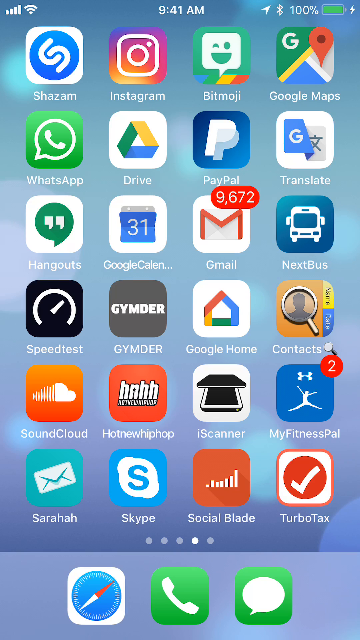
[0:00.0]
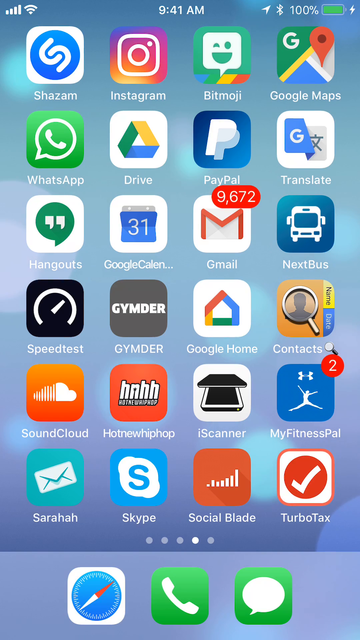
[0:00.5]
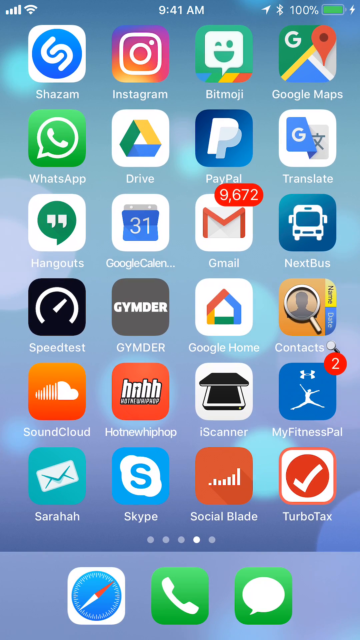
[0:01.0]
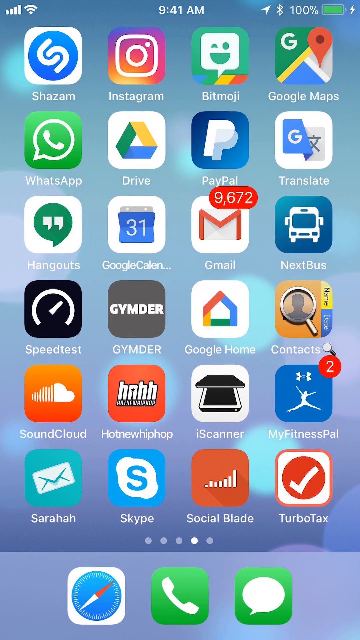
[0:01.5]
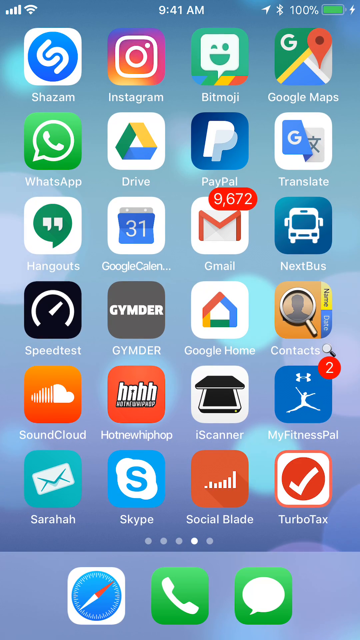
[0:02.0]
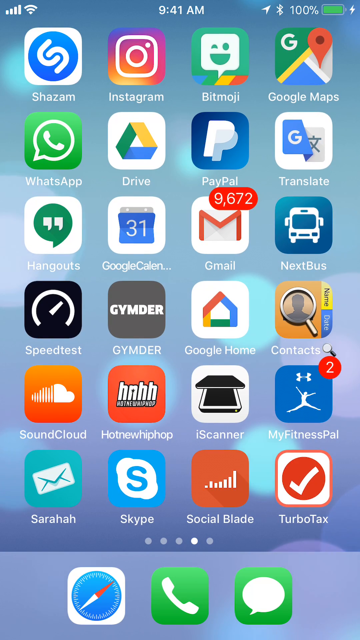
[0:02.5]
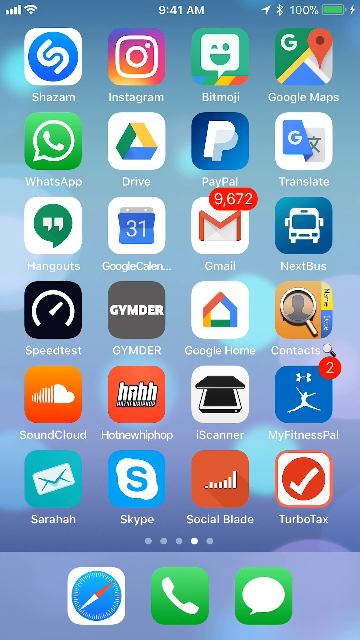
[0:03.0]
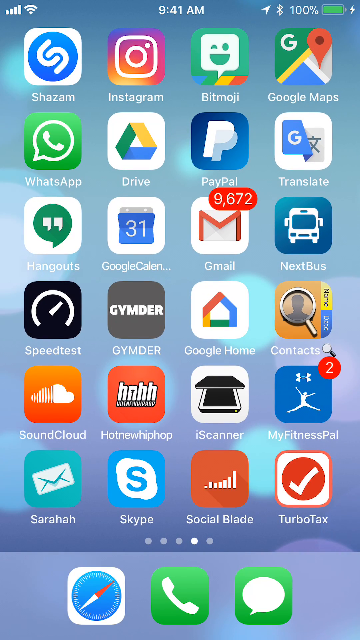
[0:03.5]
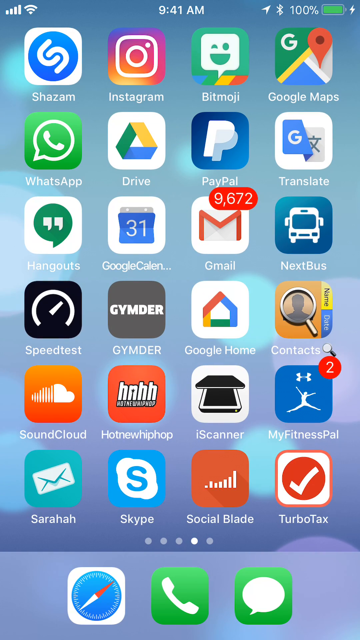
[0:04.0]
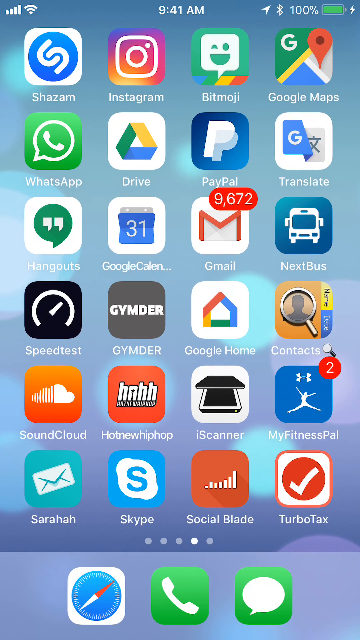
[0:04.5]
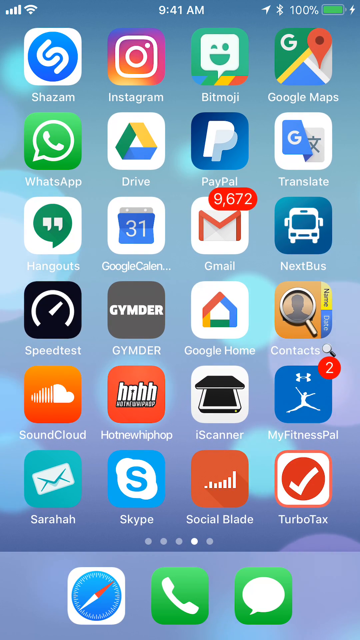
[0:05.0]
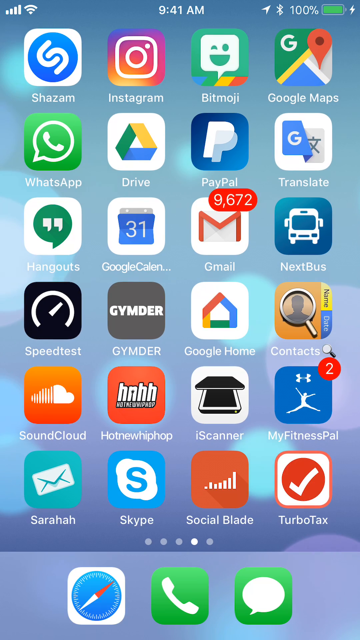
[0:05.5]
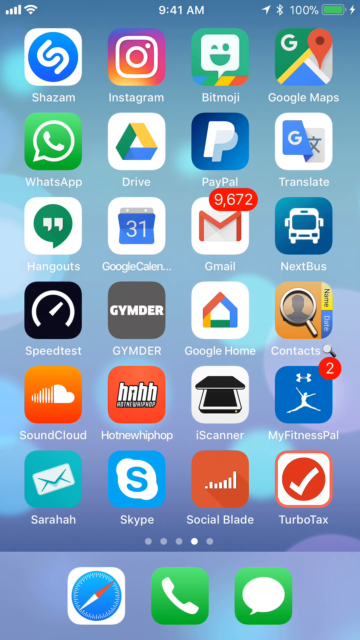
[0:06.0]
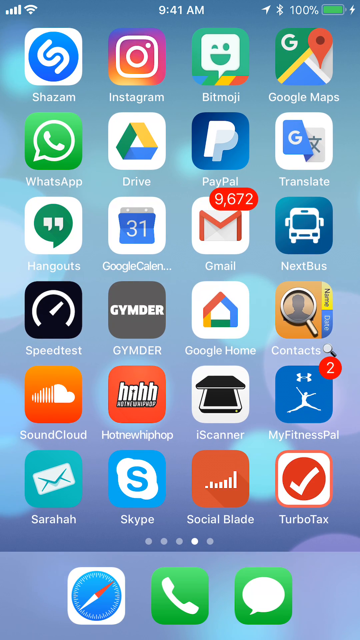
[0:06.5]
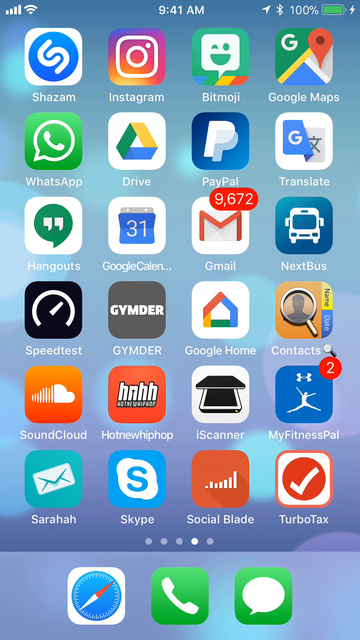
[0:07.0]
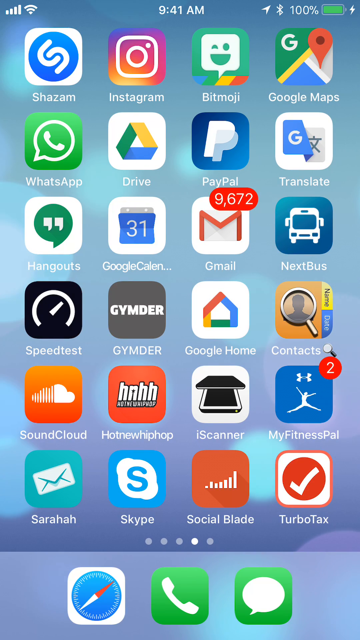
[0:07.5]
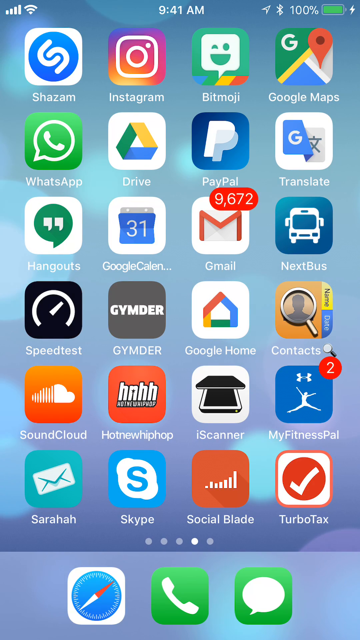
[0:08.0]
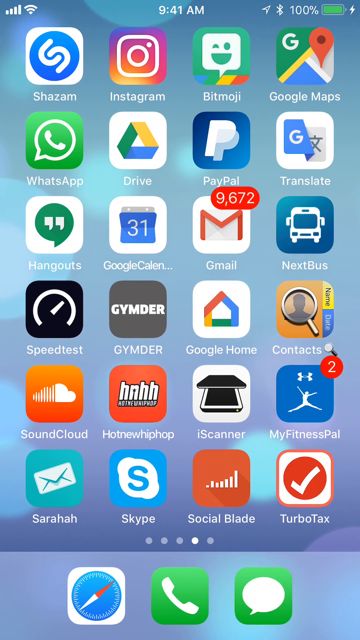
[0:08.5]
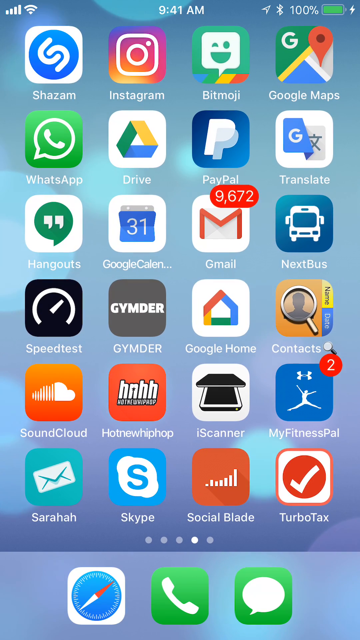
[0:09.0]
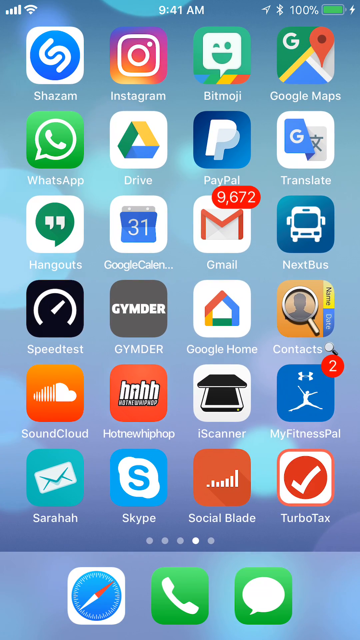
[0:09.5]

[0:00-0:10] A screen shows a cell phone, apparently an iPhone, with dozens of app icons on it. At the very bottom are the Safari compass logo for Apple's web browser, a green phone icon and a green text message icon. The time at the top of the phone reads 9:41 a.m., and the battery is at 100%. The Gmail app shows 9,672 unread emails, and the MyFitnessPal app has two notifications. Many other apps are installed on the phone. The phone screen has a light blue background with a bokeh effect.